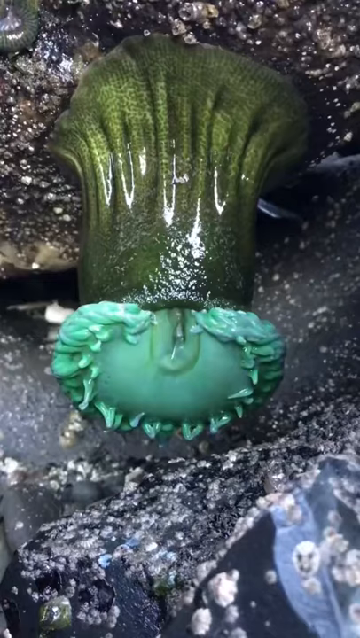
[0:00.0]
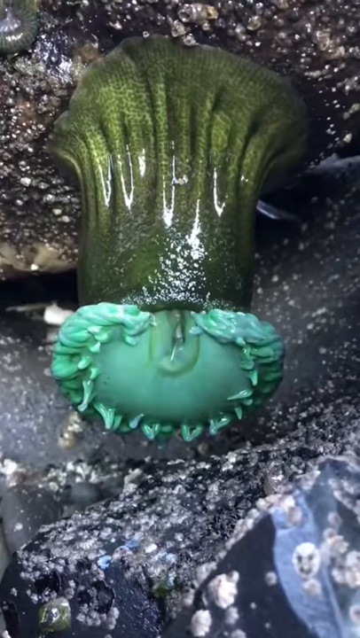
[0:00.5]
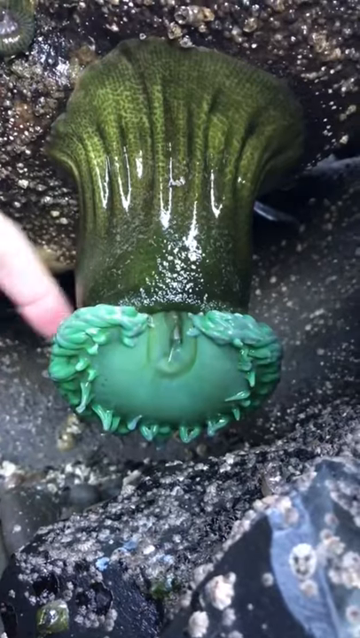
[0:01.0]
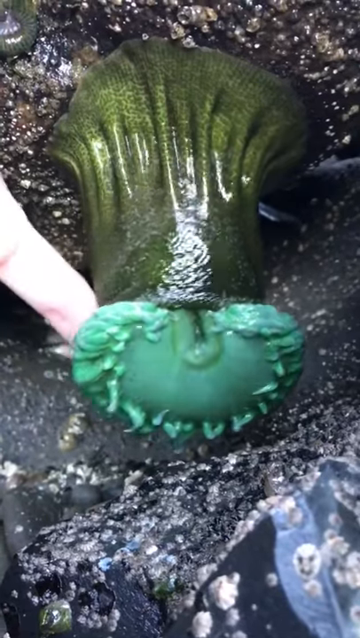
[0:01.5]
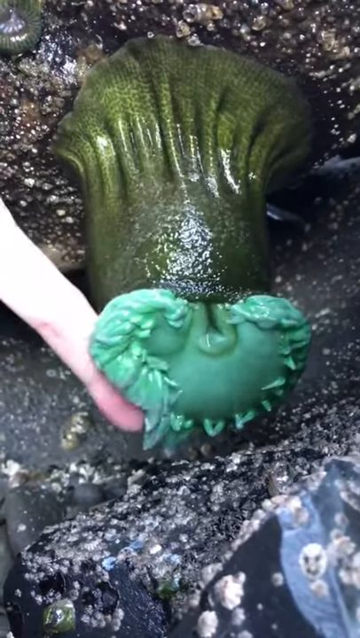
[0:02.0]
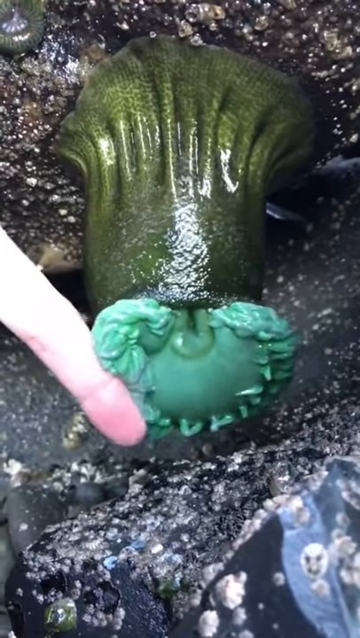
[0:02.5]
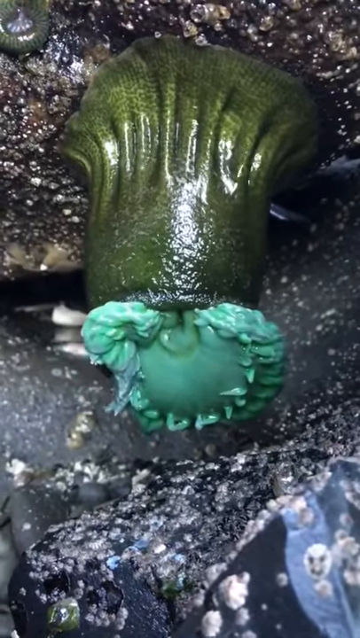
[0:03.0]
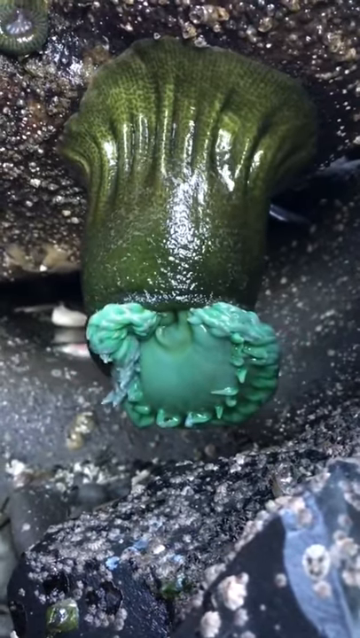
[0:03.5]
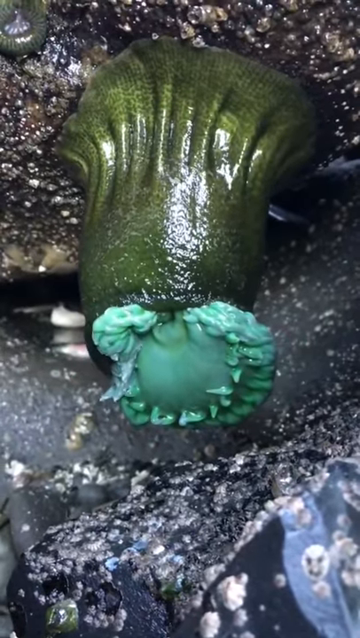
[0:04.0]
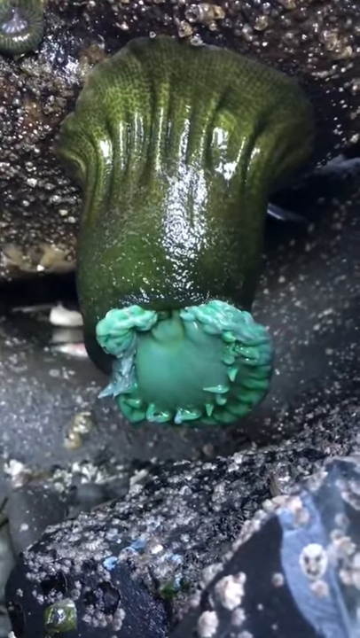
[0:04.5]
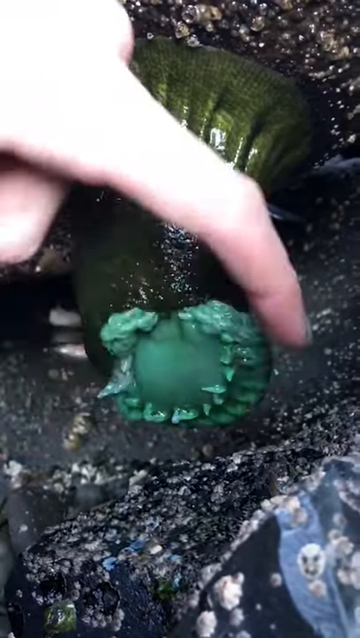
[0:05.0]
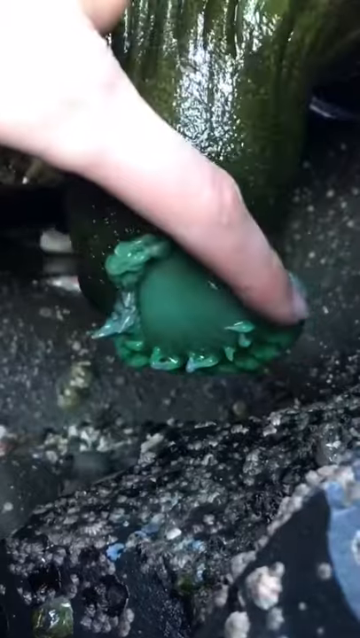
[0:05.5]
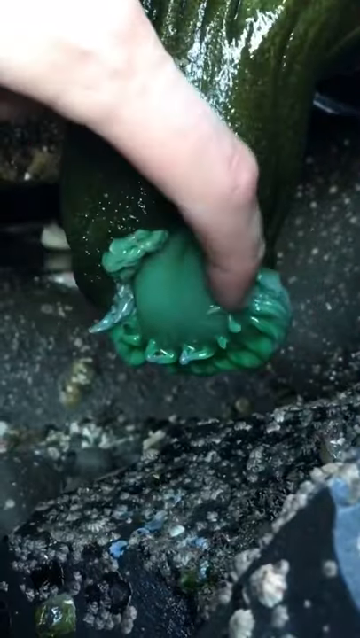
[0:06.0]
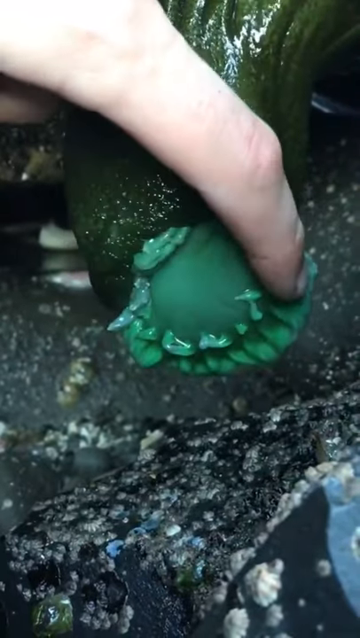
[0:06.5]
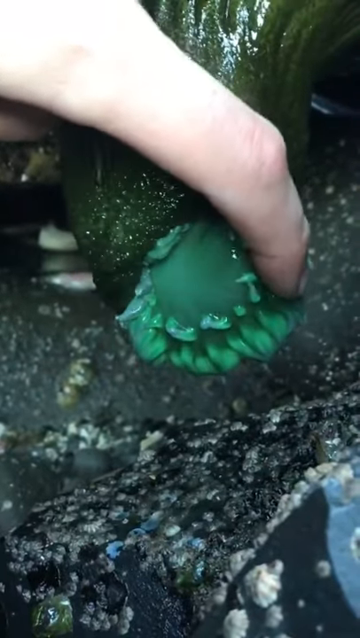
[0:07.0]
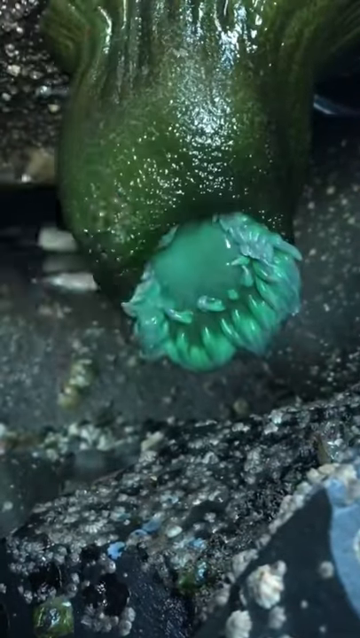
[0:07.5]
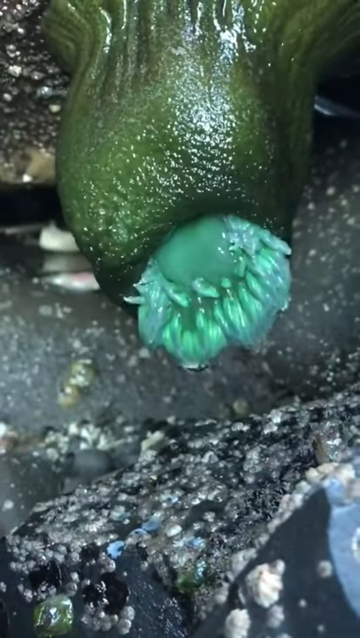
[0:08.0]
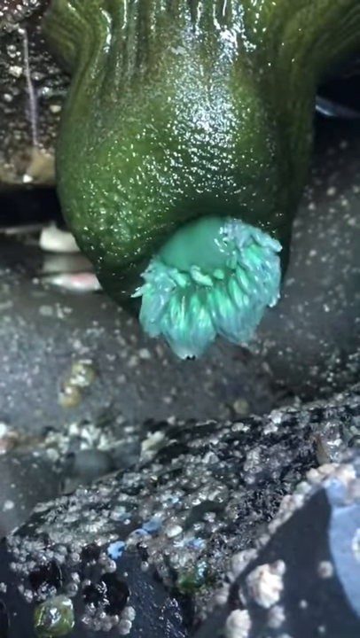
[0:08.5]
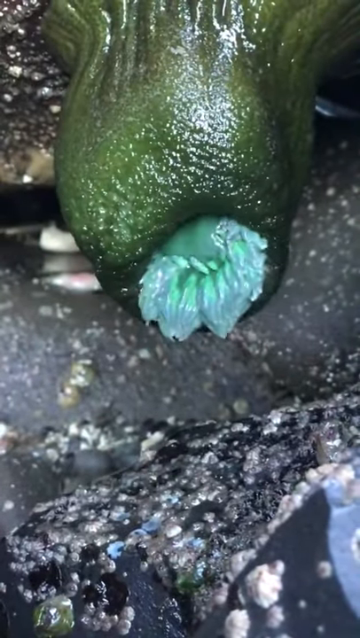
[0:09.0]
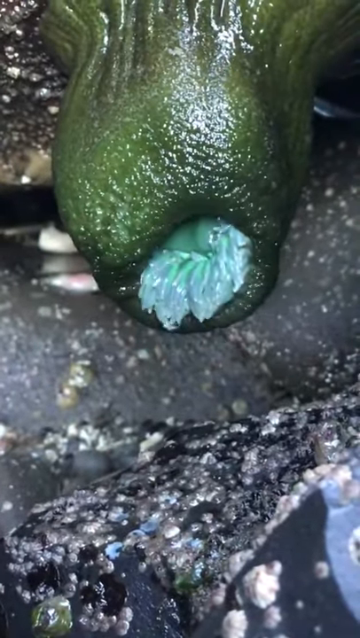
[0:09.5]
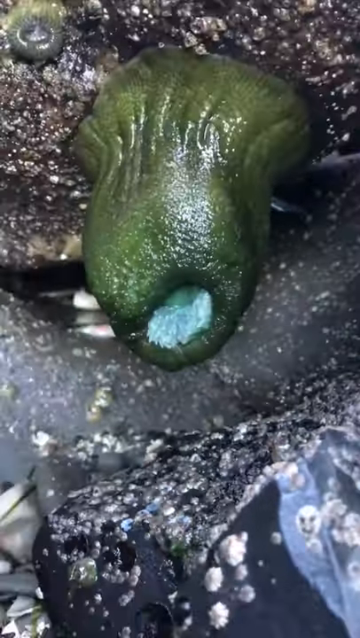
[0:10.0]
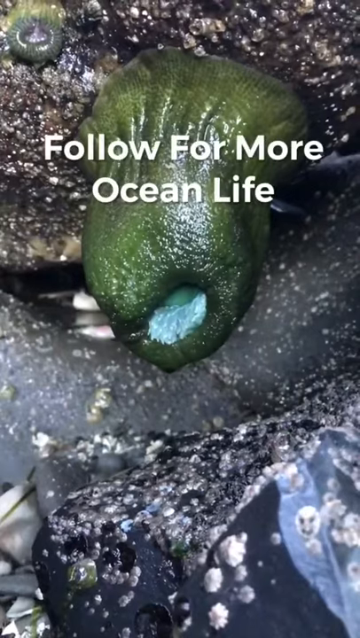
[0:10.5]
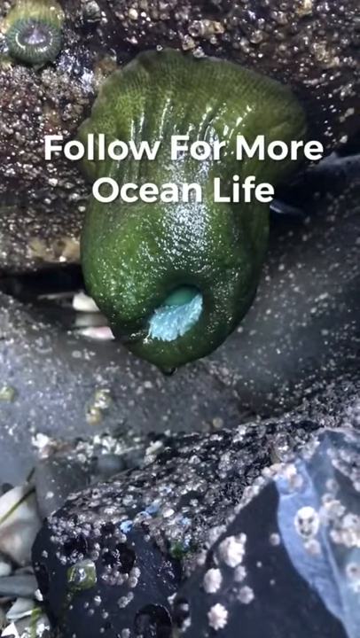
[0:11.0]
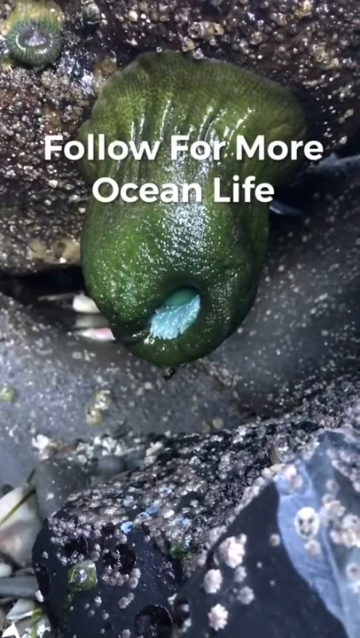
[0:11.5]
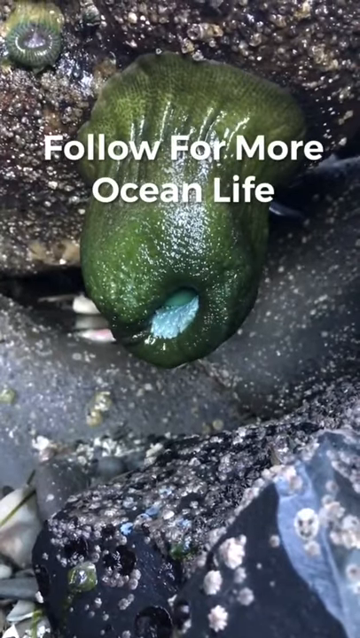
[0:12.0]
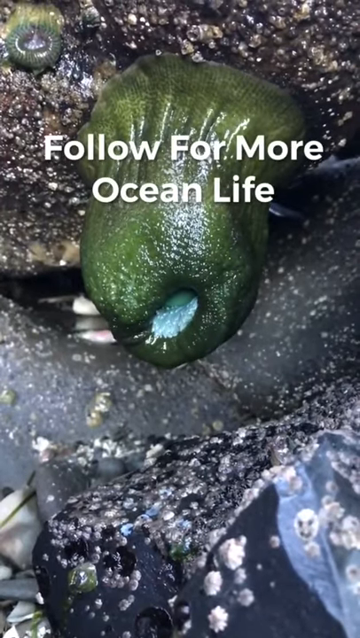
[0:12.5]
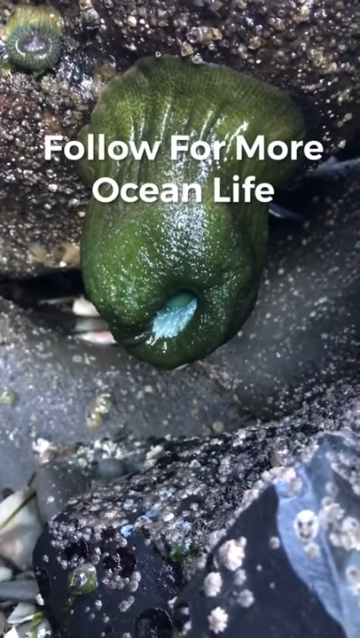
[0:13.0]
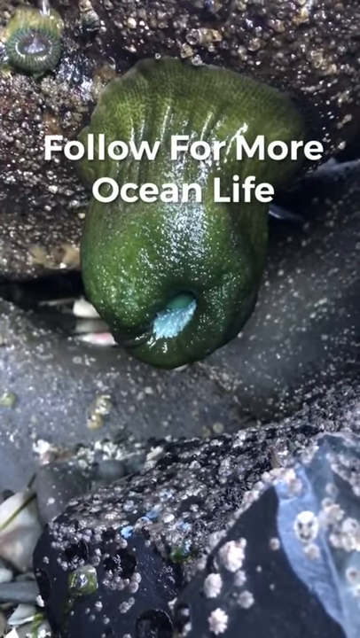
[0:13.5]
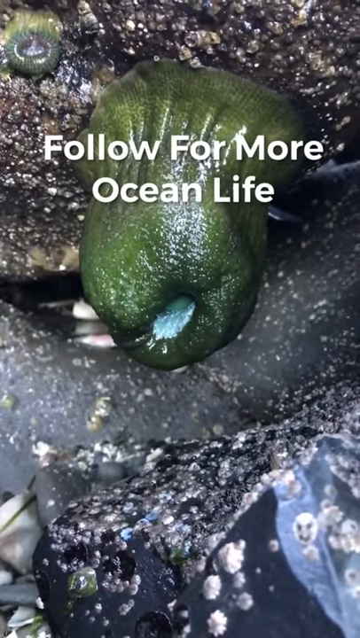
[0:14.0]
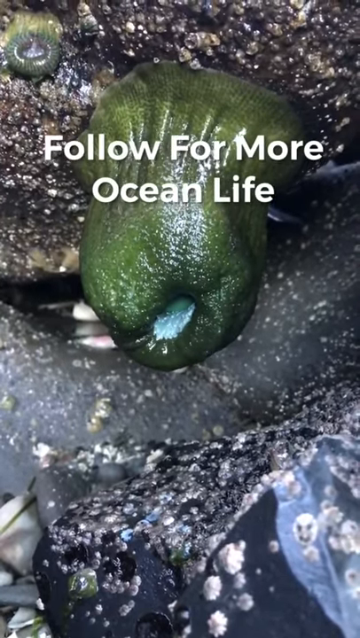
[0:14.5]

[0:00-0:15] A green sponge-like animal is the focus of the video. It has no face, arms, or legs, only a mouth, which is teal green. The title of the video says "this animal eats everything." Someone touches the creature, causing its mouth to go from open to closed; the person's hand is white. The animal appears to be attached to some sort of cave, in what looks like a damp area. At the end, the text "follow for more ocean life" appears.